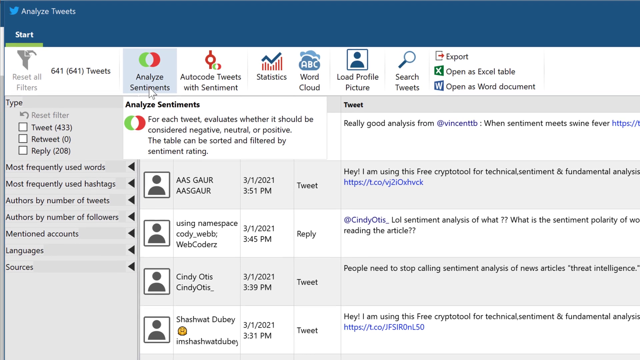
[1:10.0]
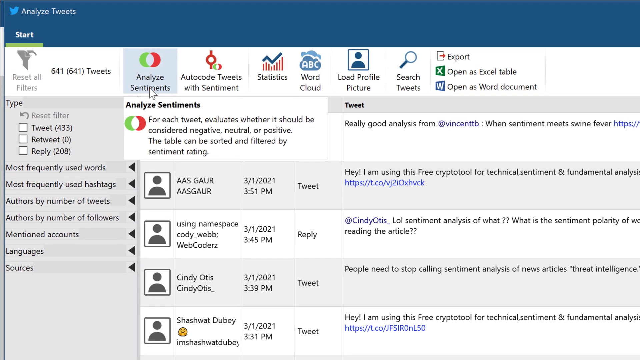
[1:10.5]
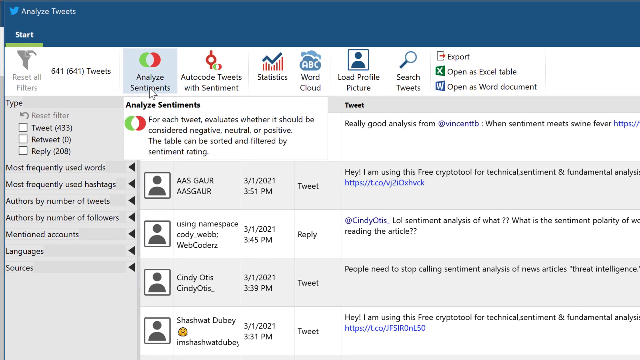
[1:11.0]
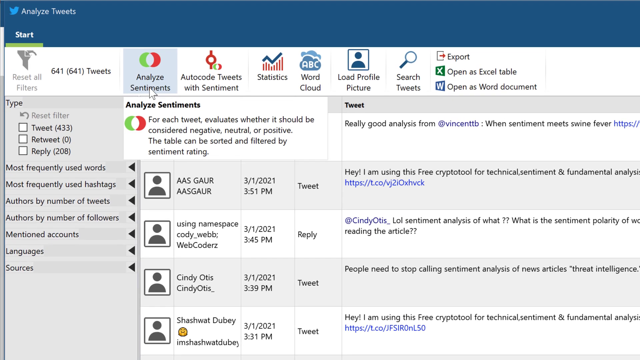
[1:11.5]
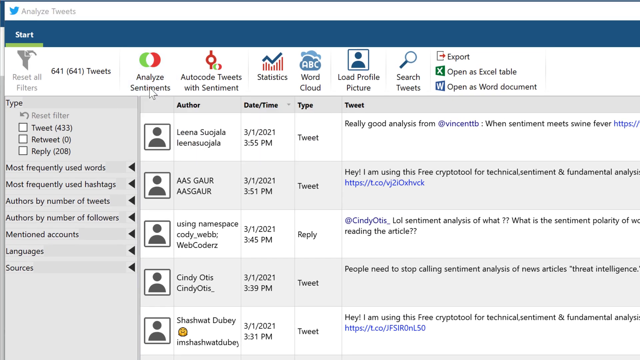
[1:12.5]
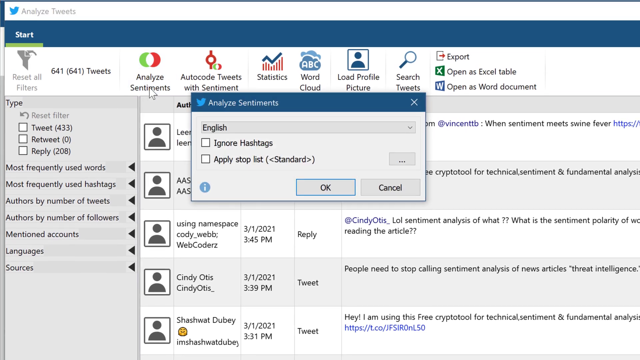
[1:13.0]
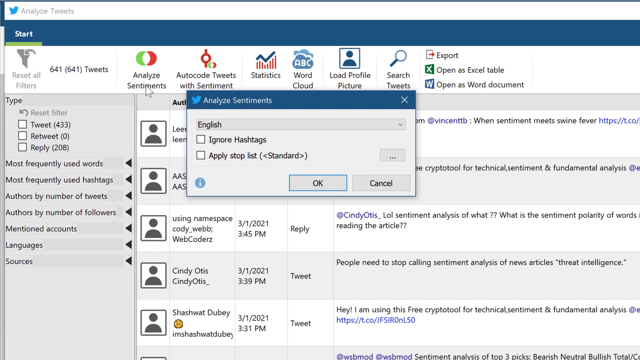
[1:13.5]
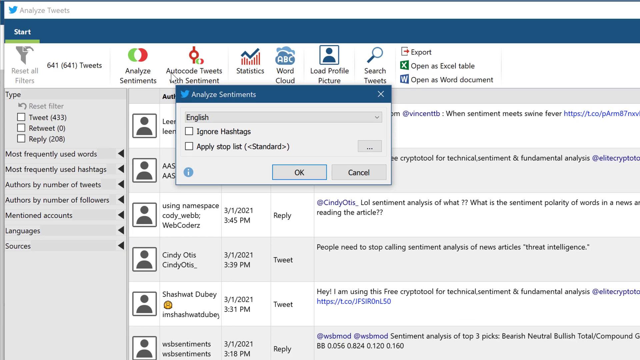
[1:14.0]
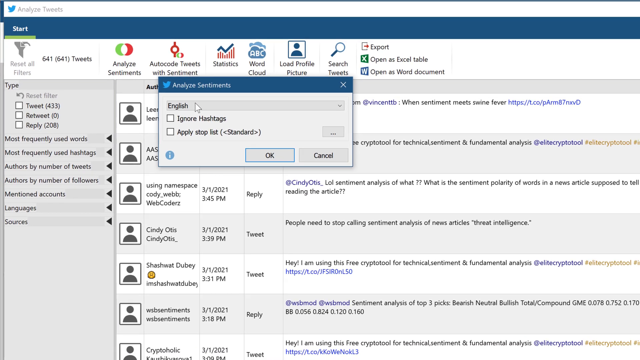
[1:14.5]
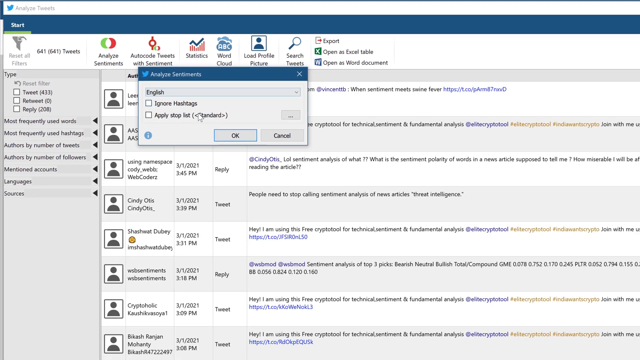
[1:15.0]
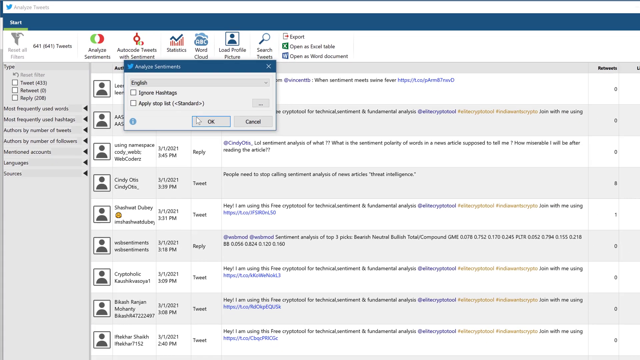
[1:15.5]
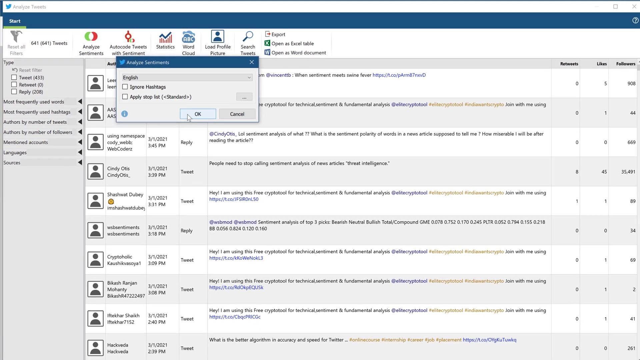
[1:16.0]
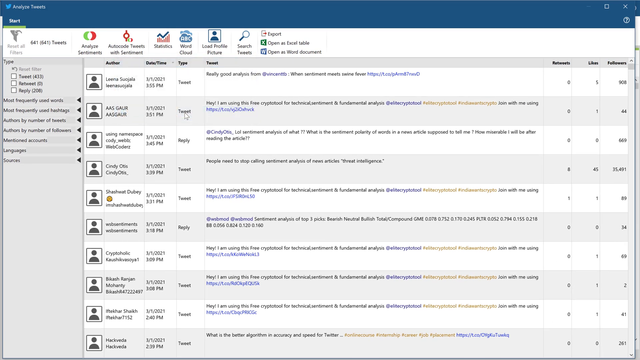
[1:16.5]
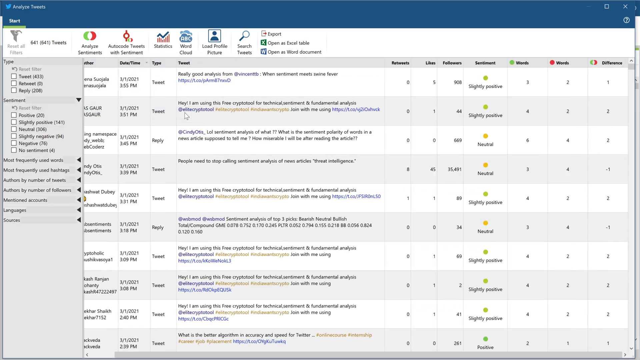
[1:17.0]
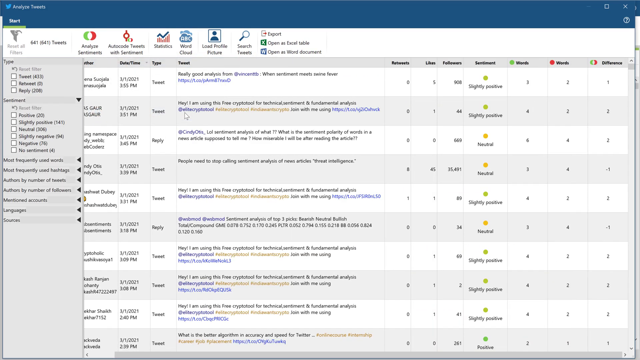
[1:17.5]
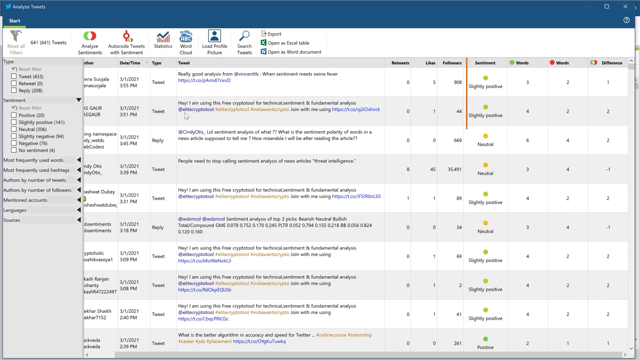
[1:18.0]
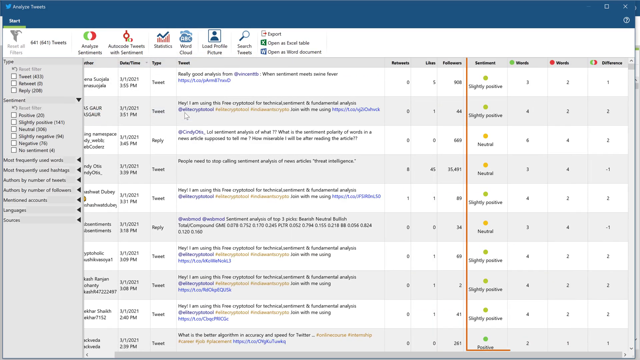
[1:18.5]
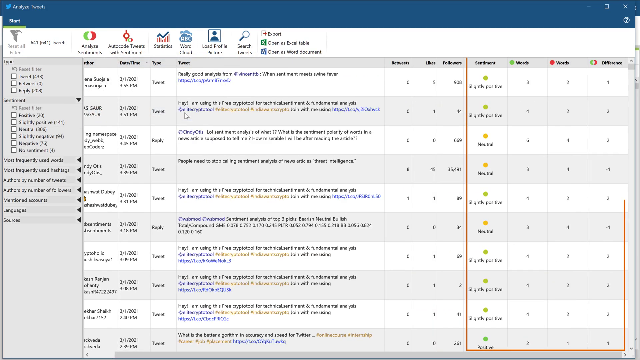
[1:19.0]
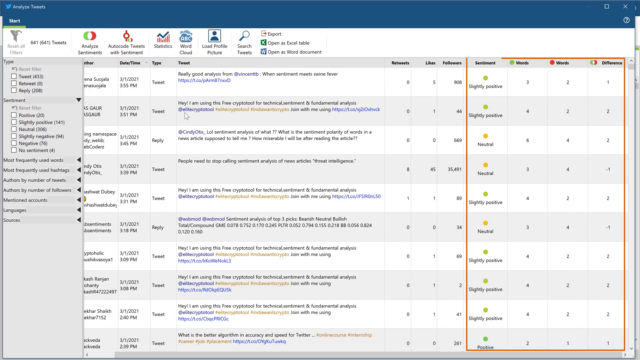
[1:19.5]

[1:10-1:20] The cursor stays over the Analyze Sentiments tab, with text below it reading "for each tweet evaluates" whether it should be considered negative, neutral, or positive, and that the table can be sorted and filtered by sentiment rating. The cursor hovers over Analyze Sentiment, clicks it, and a box pops up with further options, including ignore hashtags and stop lists. The screen highlights a column on the side, then pulls out and highlights the four columns at the far right: sentiment, positive words, negative words, and one headed by a blended symbol, green on one side and red on the other with yellow, labeled "difference." The other columns are date, time, type, tweet, retweets, likes, and followers. The panel of filter options remains along the left side, and across the top are still the options Analyze Sentiment, AutoCode Tweets with Sentiment, Statistics, Word Cloud, Load Profile Picture, Search Tweets, Export, Open as Excel Table, and Word Document.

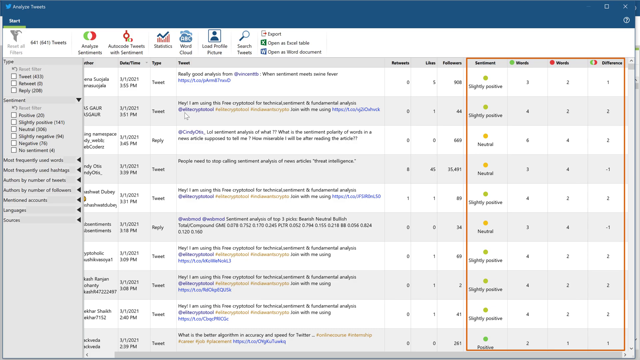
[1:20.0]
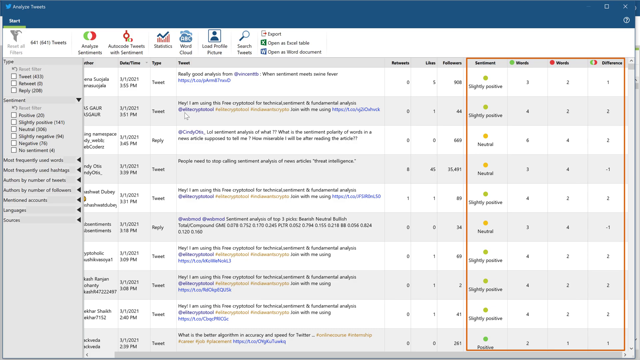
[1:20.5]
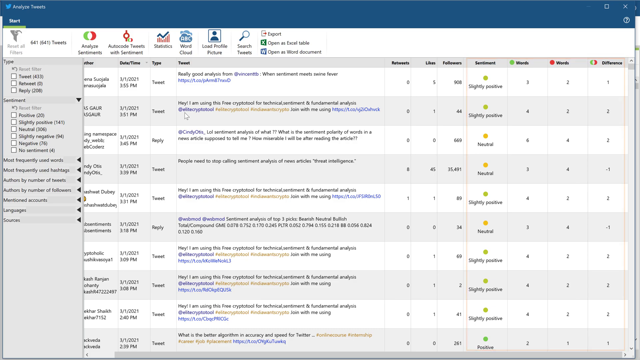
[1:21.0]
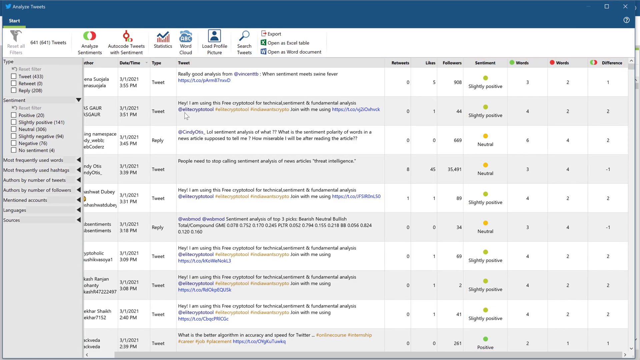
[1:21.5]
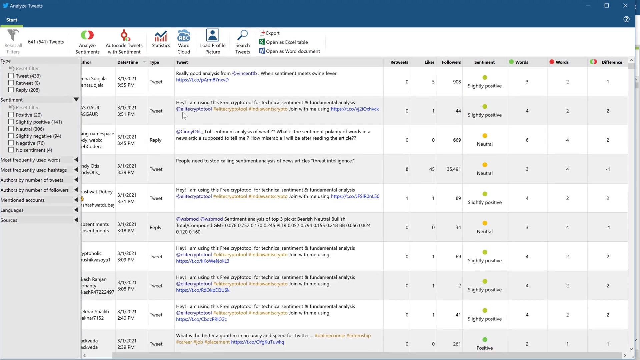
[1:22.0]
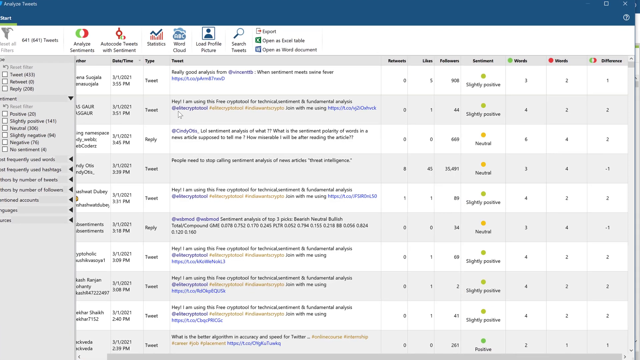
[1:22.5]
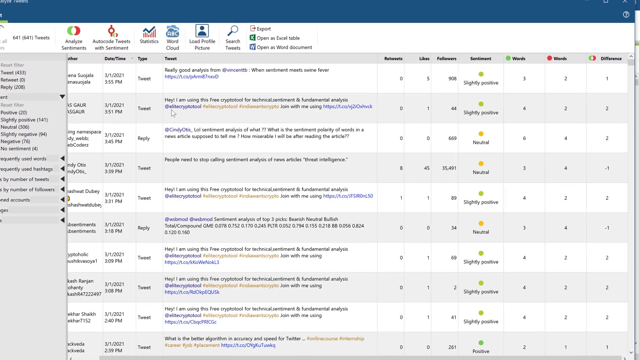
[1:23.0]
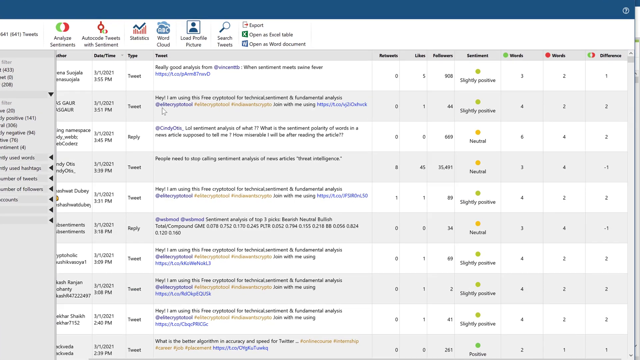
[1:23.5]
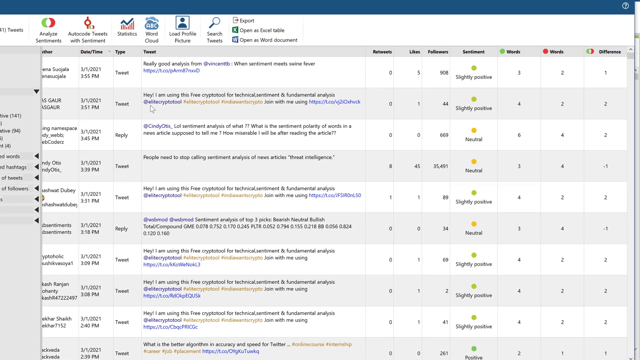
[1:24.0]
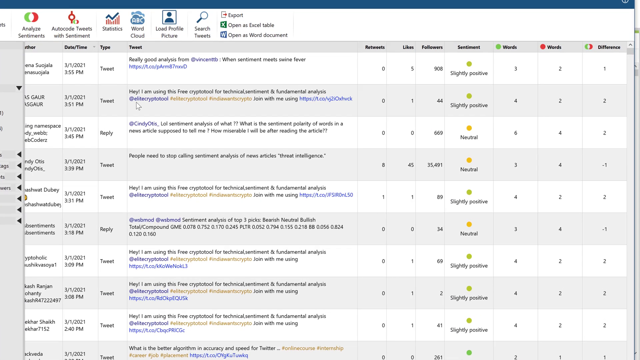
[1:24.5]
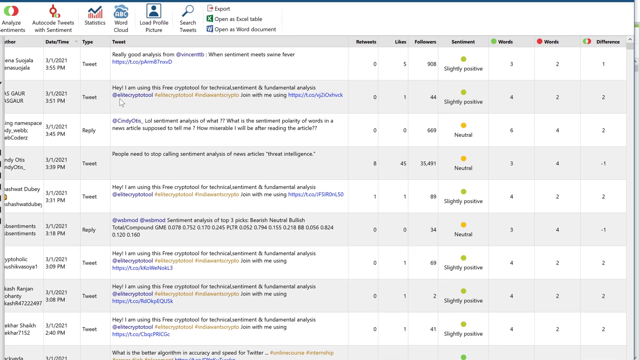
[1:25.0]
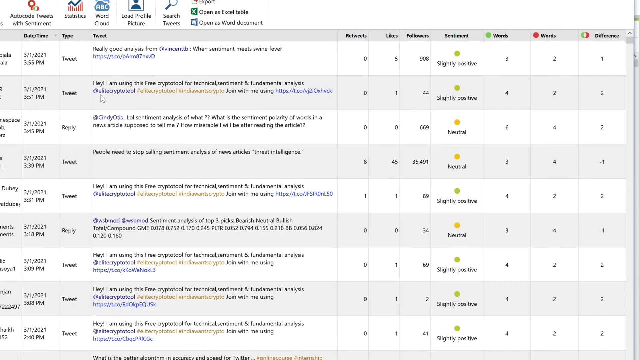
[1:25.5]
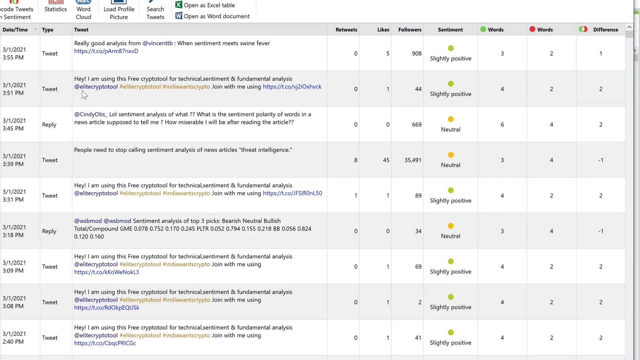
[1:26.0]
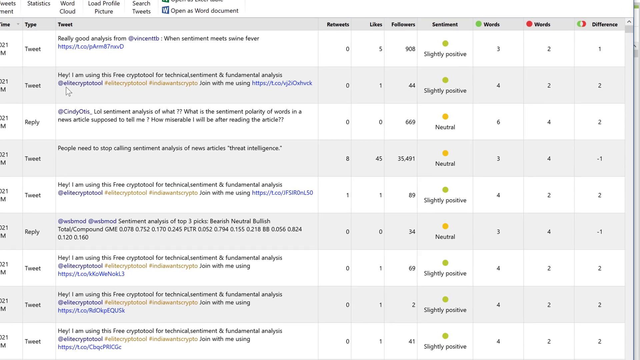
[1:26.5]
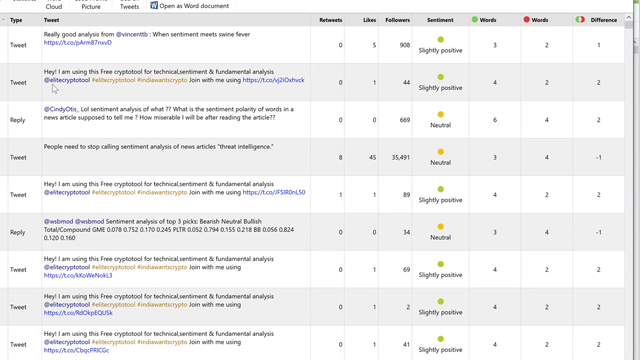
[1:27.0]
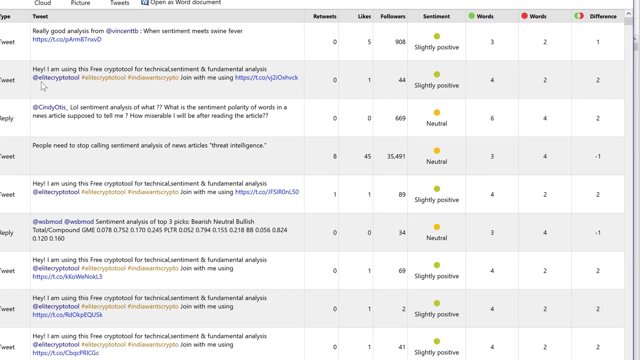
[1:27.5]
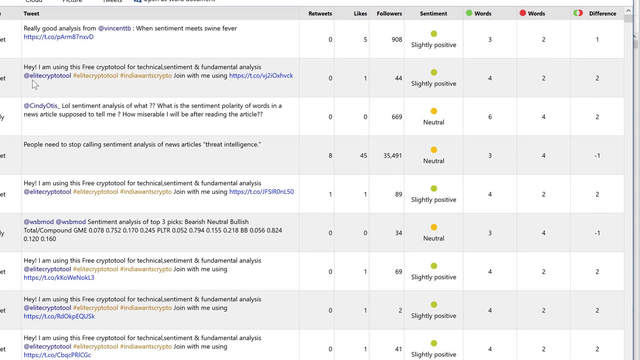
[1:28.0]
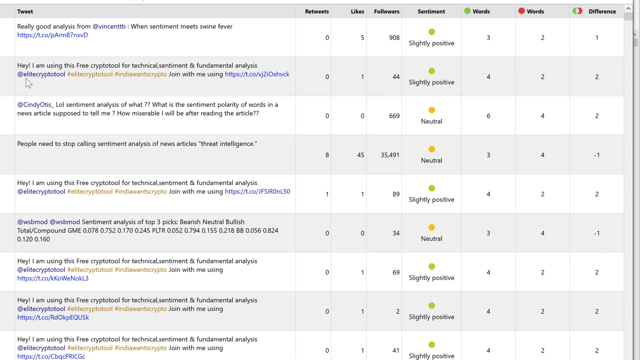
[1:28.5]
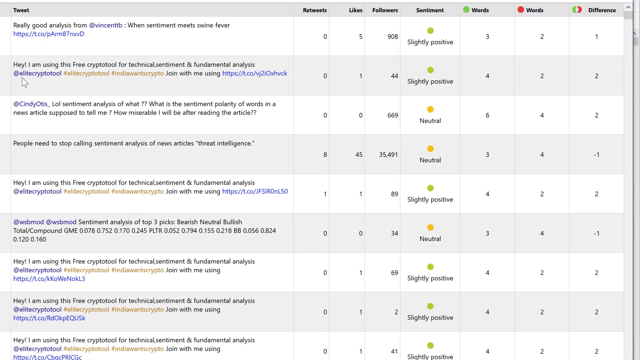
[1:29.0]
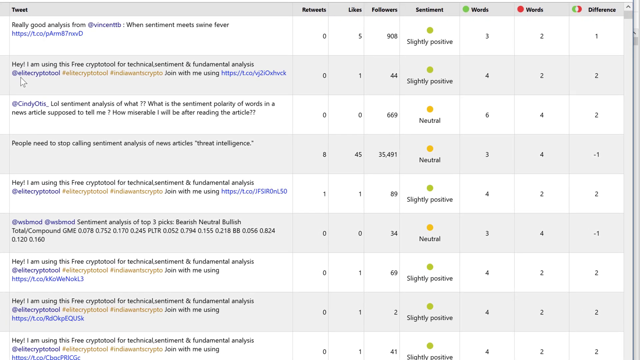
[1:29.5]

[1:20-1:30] The cursor highlights the entire side column group of sentiment, positive words, negative words, and difference, which is outlined in red while the cursor rests over it. The view zooms toward that side of the screen and the red is removed. As it pulls back out to the center, some tweets are visible, including ones reading "really good analysis from Vincent B. when sentiment means swine fever," "Hey, I'm using this free crypto tool for technical sentiment and fundamental analysis," "lol sentiment analysis of what? What is the sentiment polarity of words in a news article supposed to tell me? How miserable I will be after reading the article," "People need to stop calling sentiment analysis of news articles threat intelligence," and "Sentiment analysis of top three picks, bearish, neutral, bullish, total compound," along with other retweets.